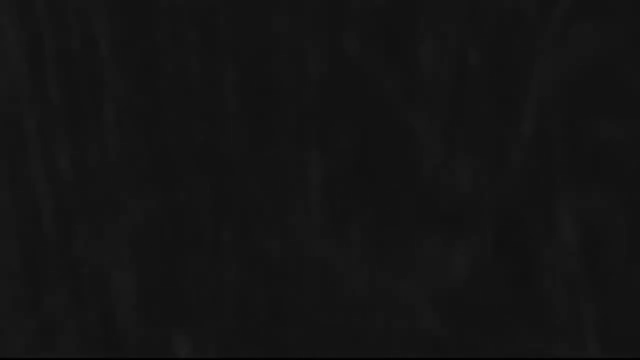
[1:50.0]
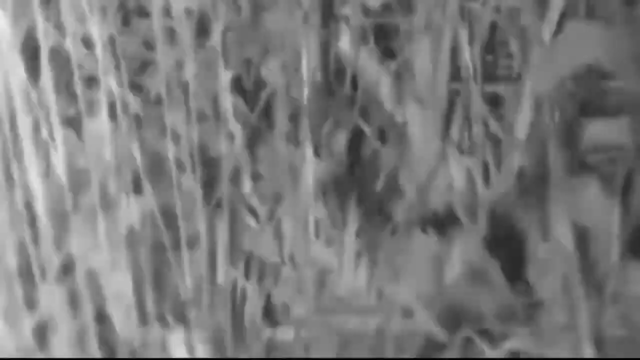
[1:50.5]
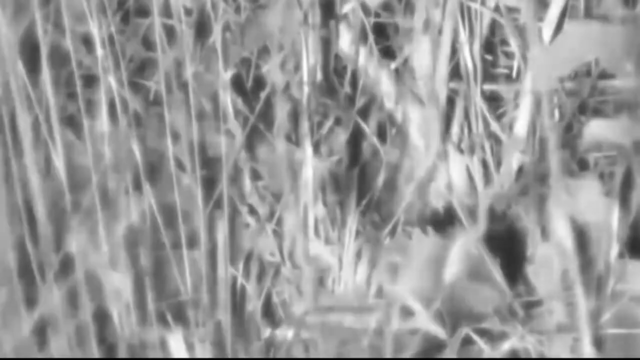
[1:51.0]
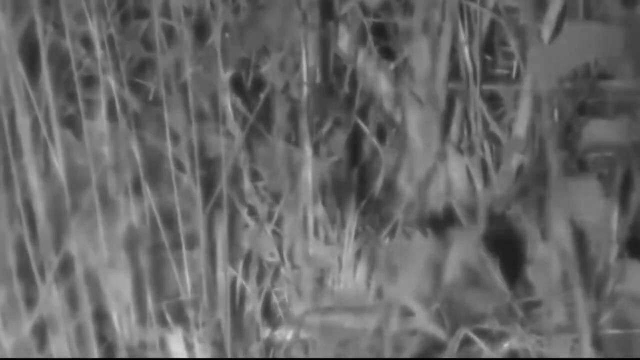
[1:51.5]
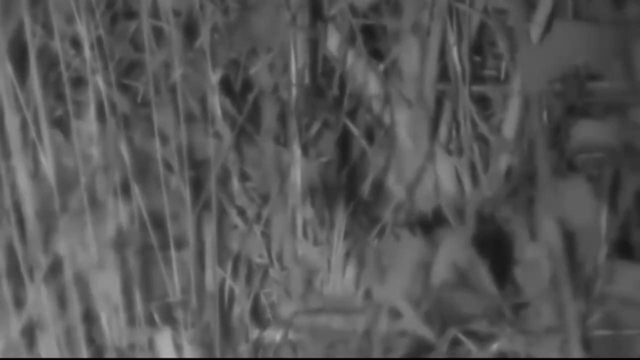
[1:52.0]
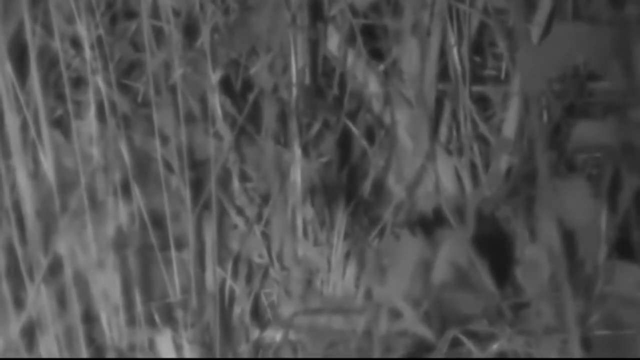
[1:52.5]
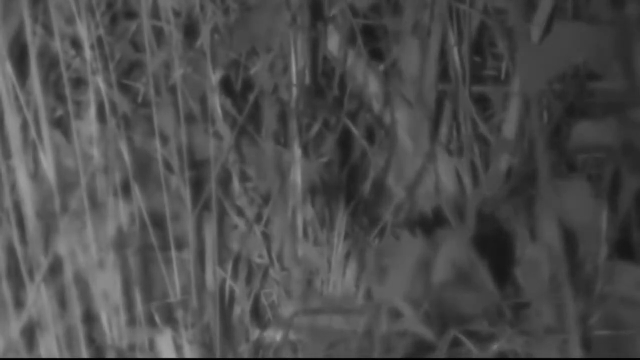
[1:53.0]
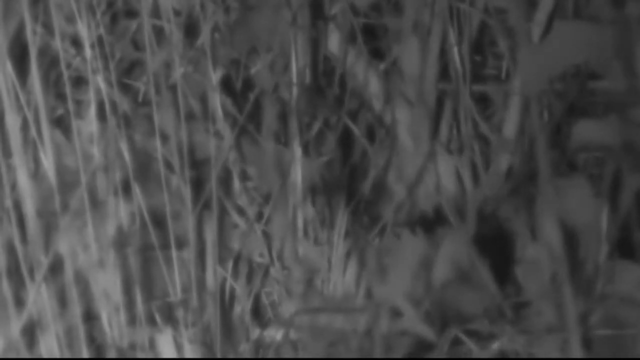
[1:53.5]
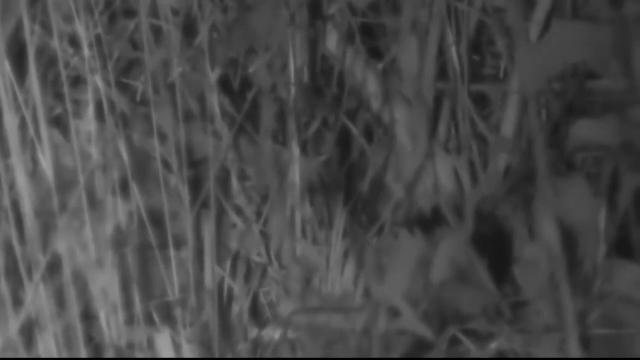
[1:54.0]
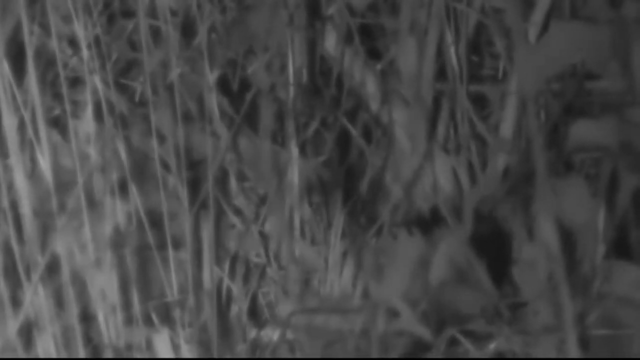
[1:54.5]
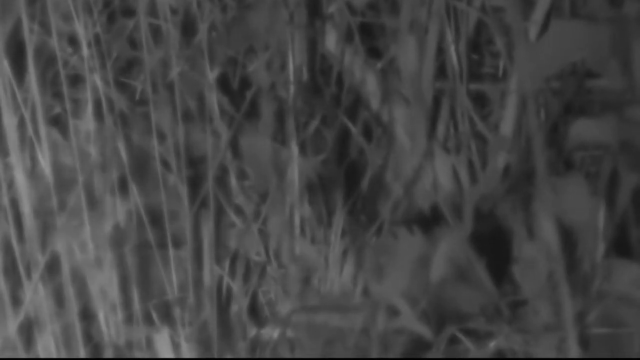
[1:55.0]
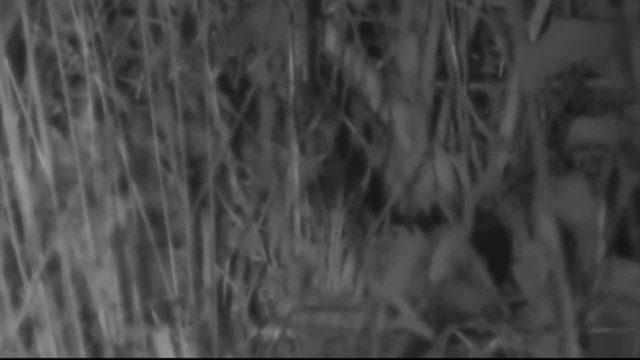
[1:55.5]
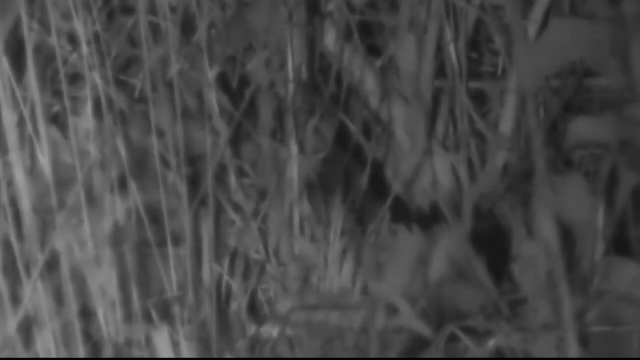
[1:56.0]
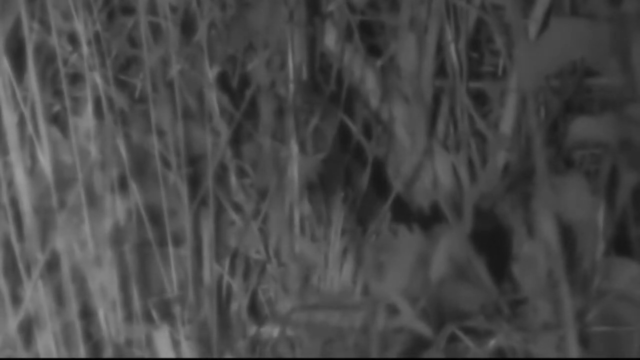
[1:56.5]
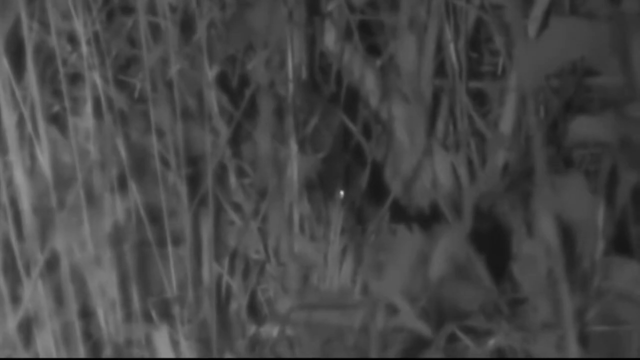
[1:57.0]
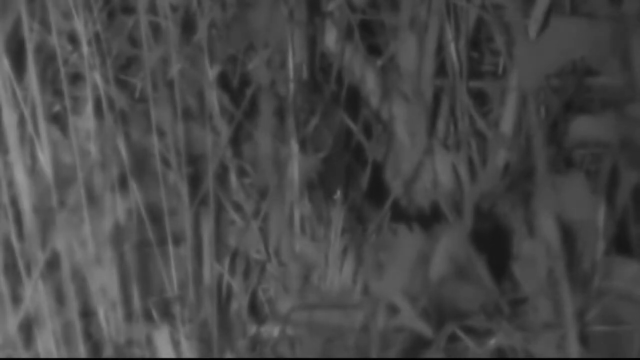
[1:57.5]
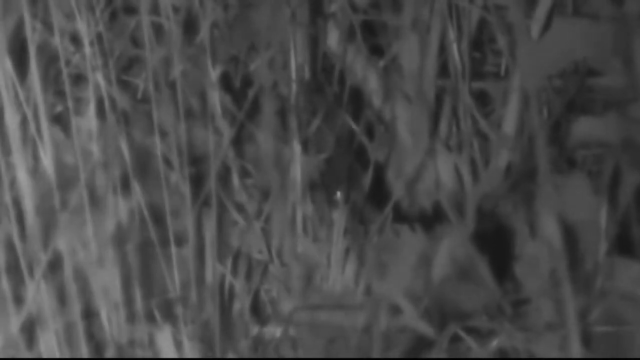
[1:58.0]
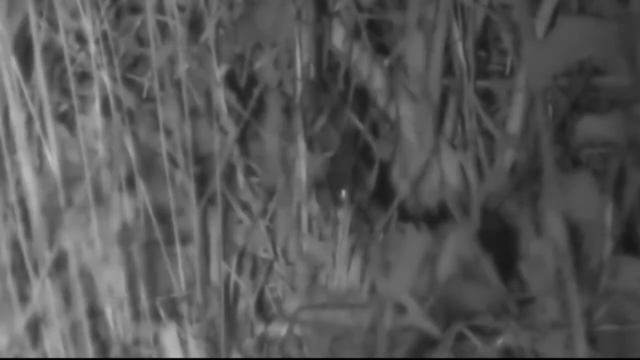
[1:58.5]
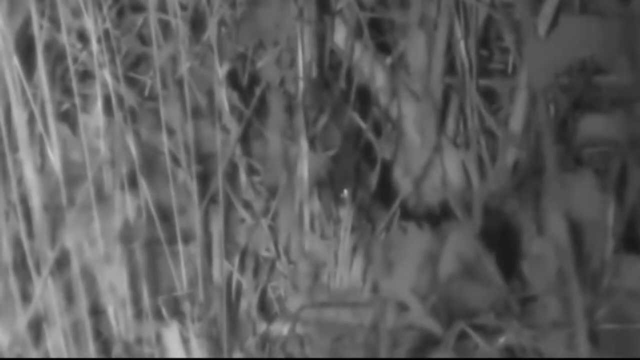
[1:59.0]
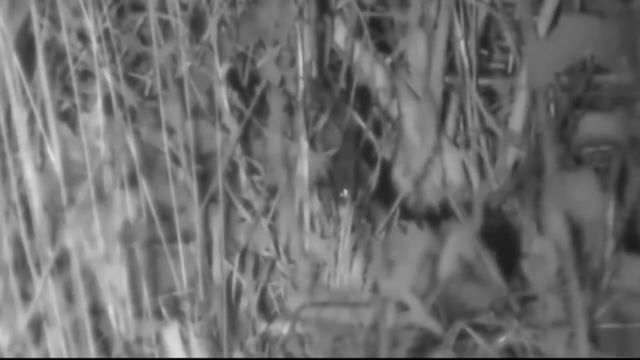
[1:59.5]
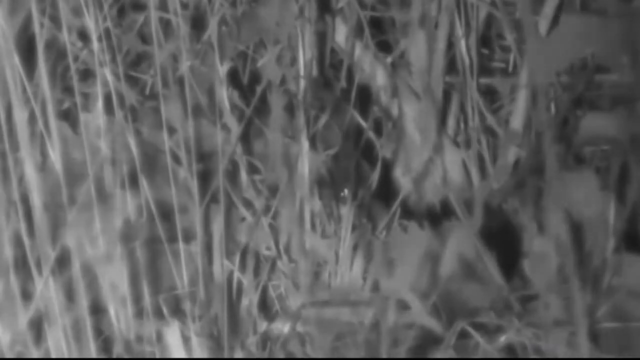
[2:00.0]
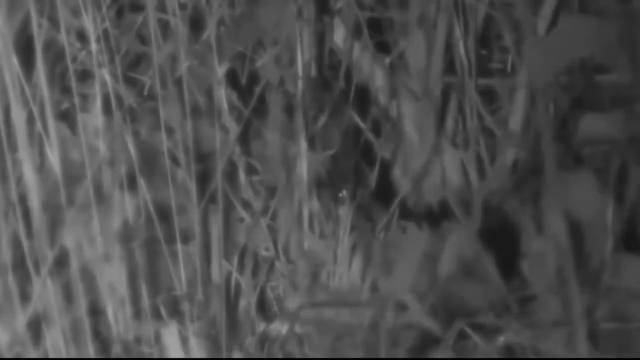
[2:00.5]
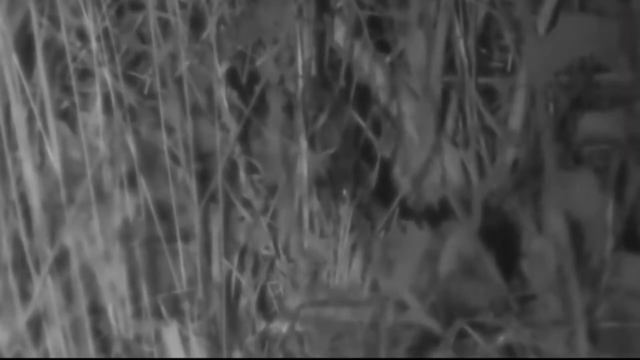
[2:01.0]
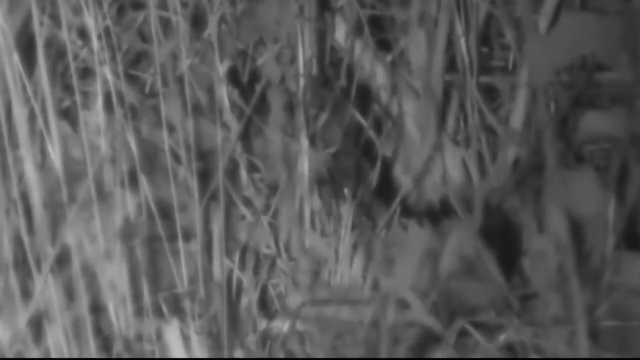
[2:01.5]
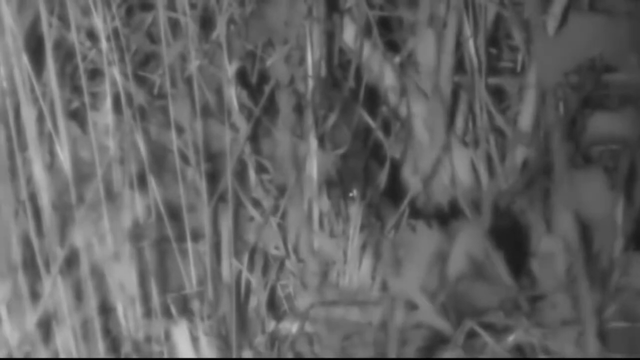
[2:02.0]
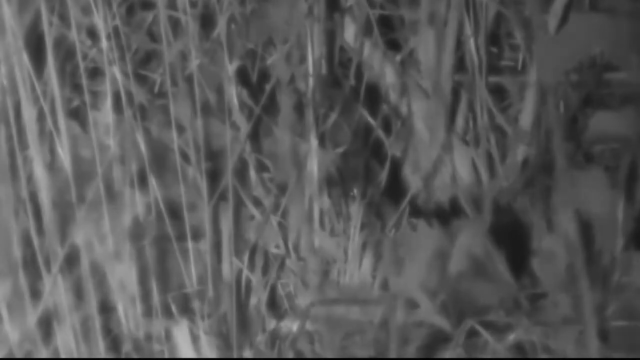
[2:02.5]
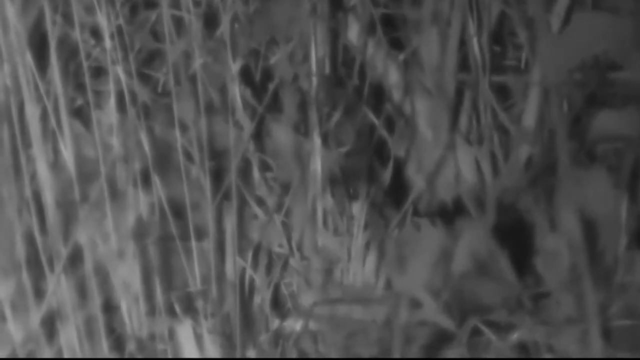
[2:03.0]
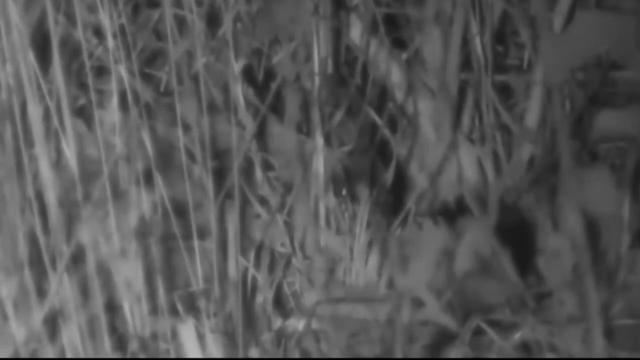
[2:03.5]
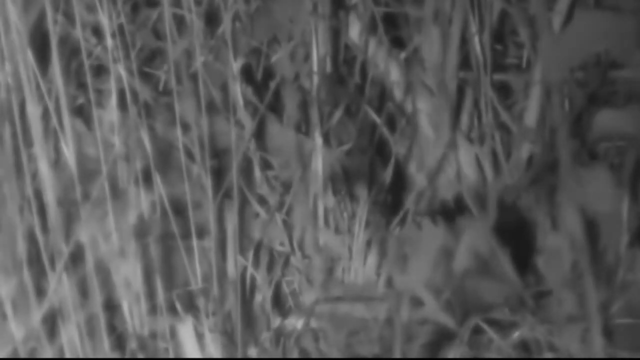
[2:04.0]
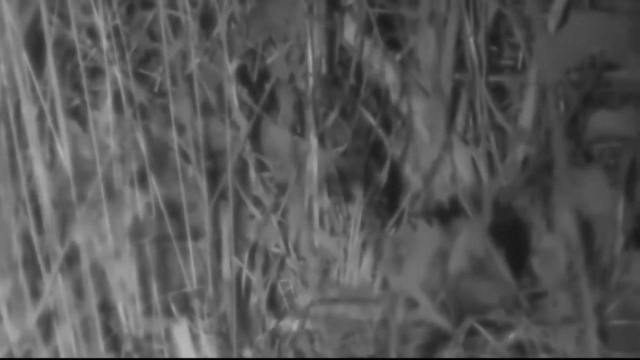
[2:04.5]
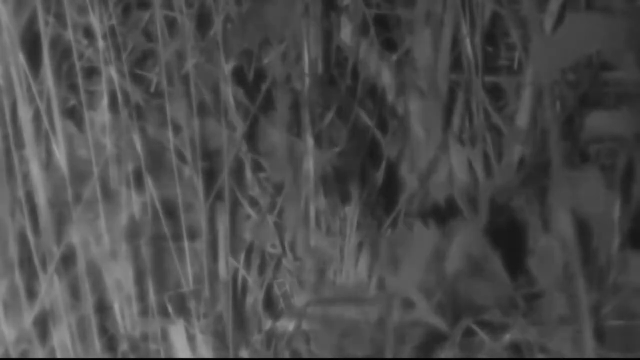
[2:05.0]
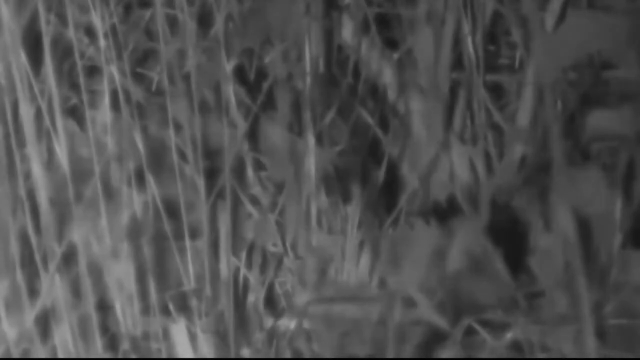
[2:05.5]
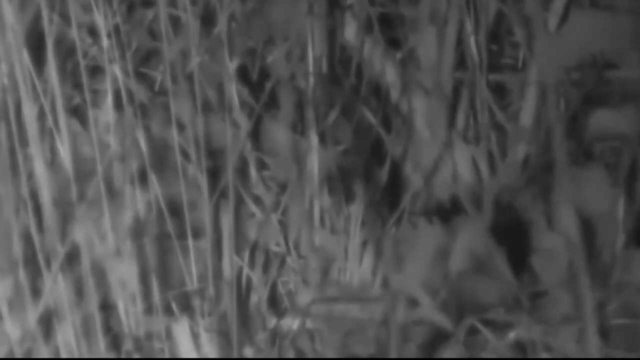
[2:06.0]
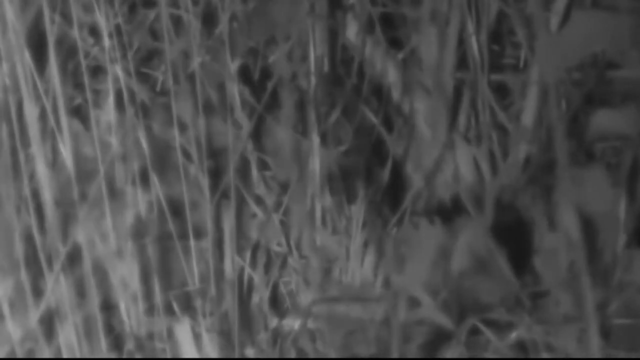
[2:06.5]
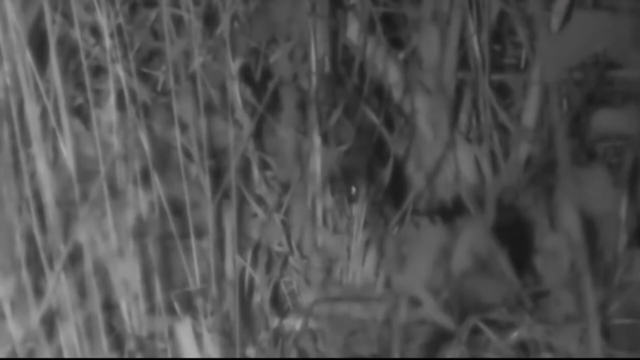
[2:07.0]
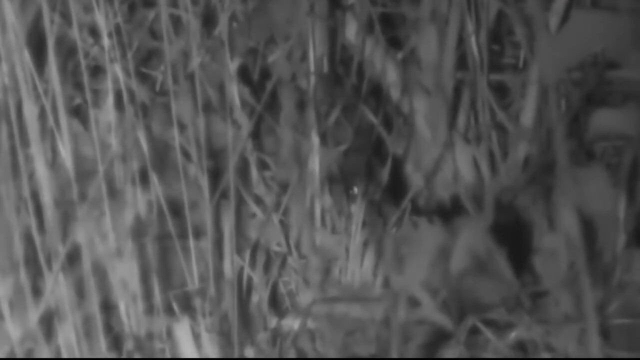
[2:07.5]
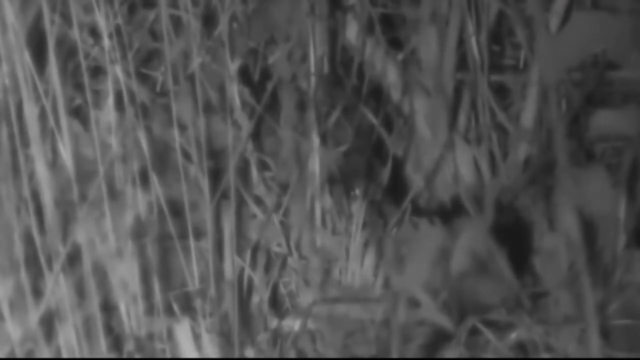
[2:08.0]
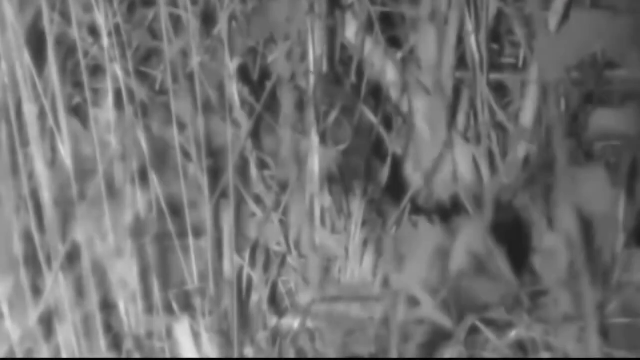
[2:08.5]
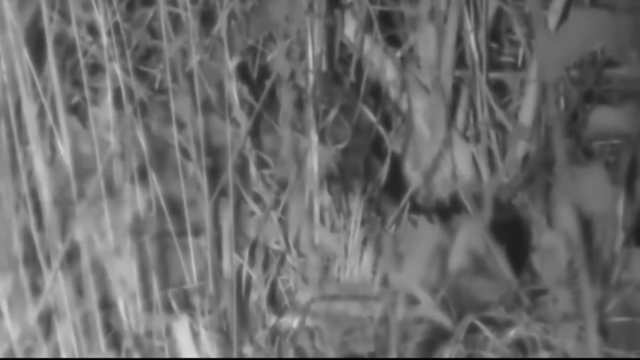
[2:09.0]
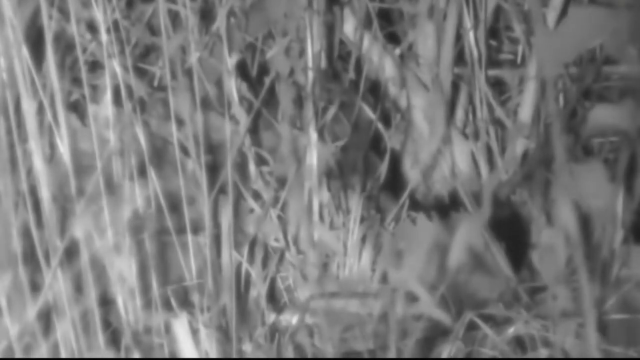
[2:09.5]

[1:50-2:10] The view still looks through the grass, and there is movement again: something like an eye peeking out, though what it is remains unclear; one moment it looks like an anteater, the next like a dog or a cat. There is a circle. In the background there is movement and a light that looks like a flashlight, something shining white on them, with a lot of light shining down there, maybe an eye glowing. Something dark moves back there, and then his face is visible.